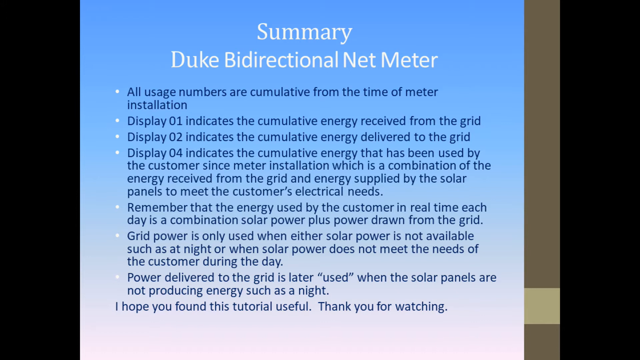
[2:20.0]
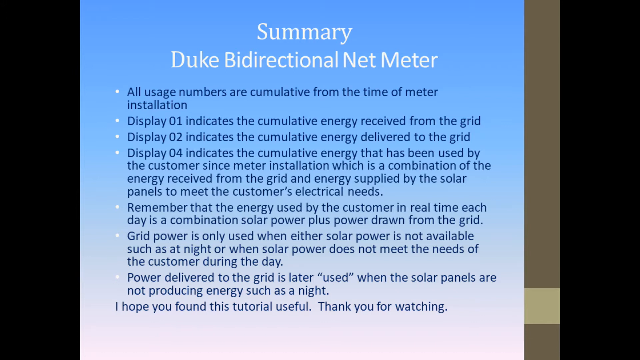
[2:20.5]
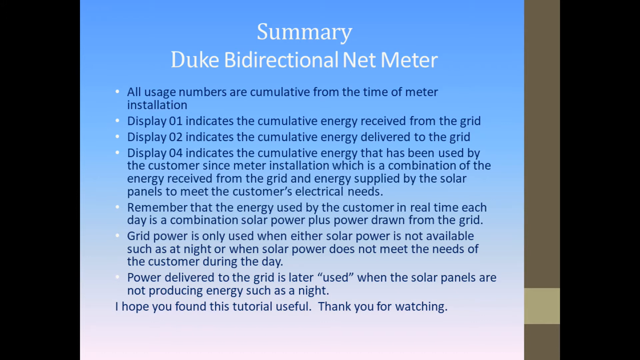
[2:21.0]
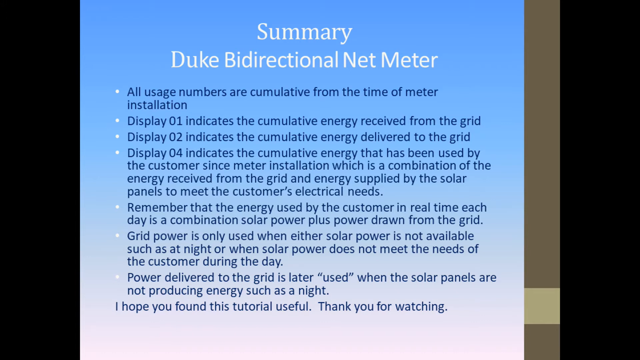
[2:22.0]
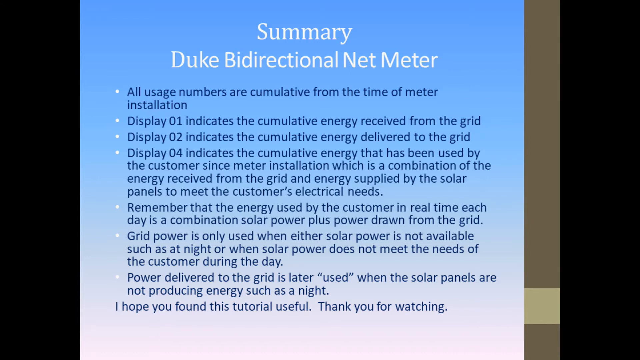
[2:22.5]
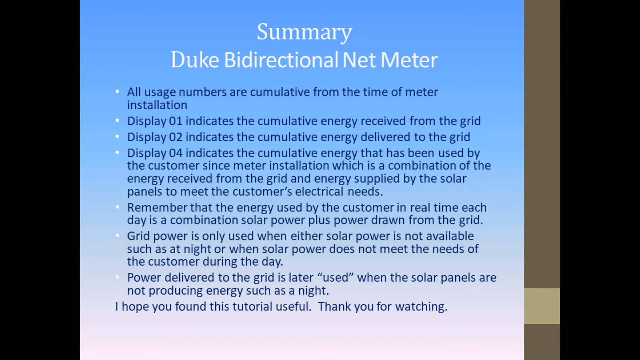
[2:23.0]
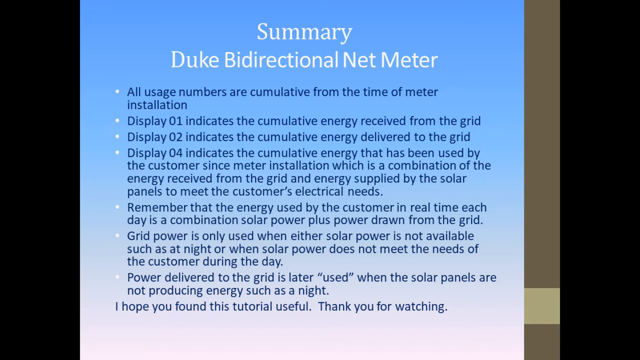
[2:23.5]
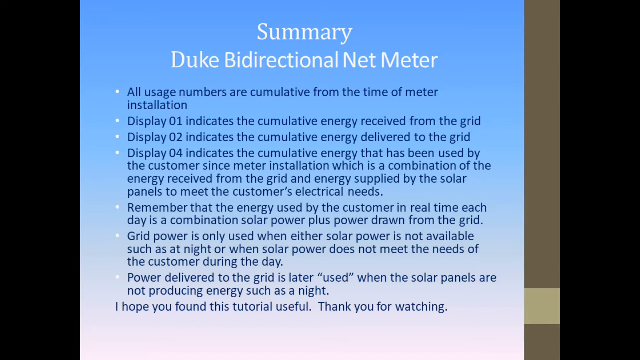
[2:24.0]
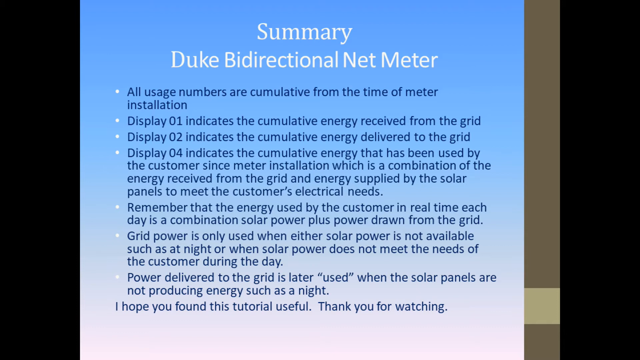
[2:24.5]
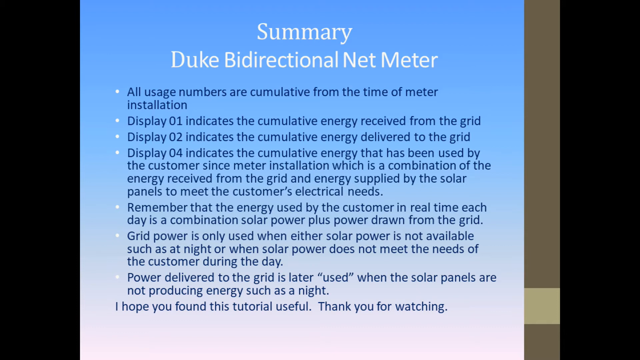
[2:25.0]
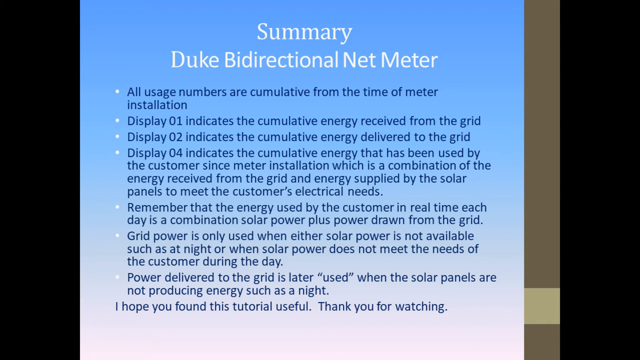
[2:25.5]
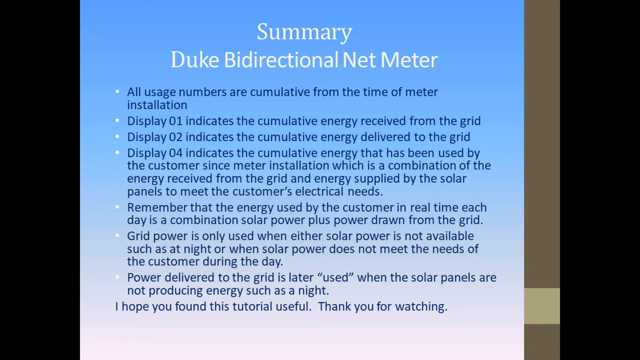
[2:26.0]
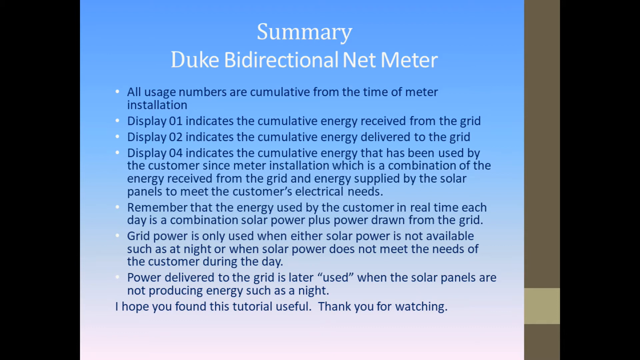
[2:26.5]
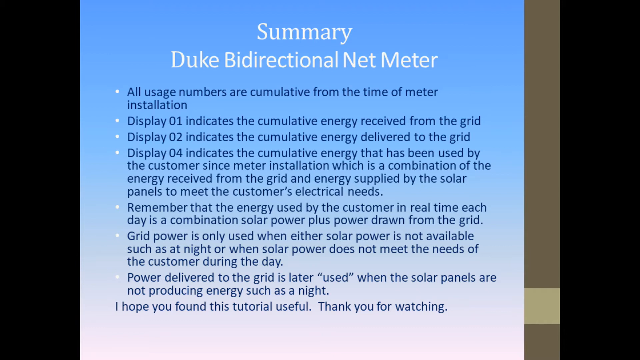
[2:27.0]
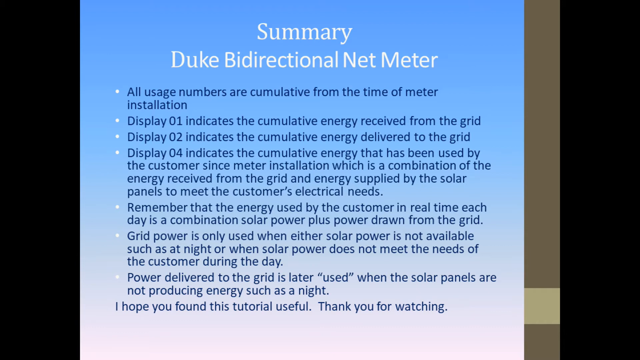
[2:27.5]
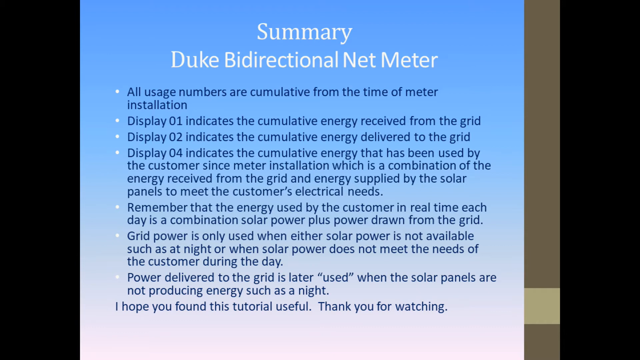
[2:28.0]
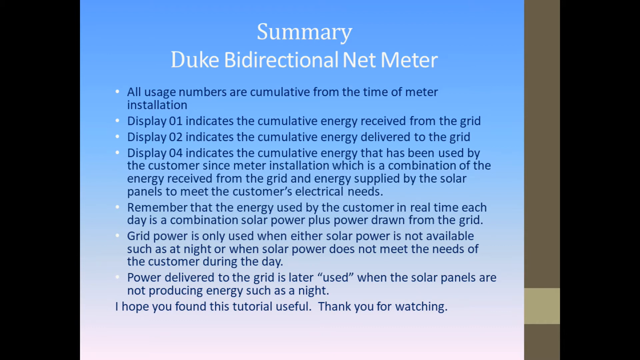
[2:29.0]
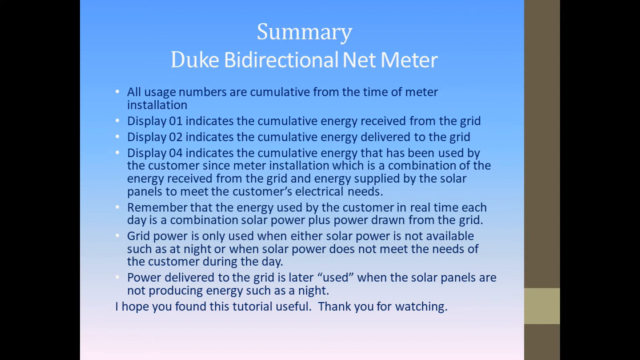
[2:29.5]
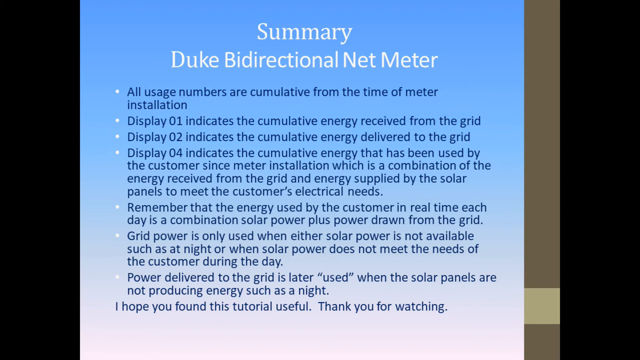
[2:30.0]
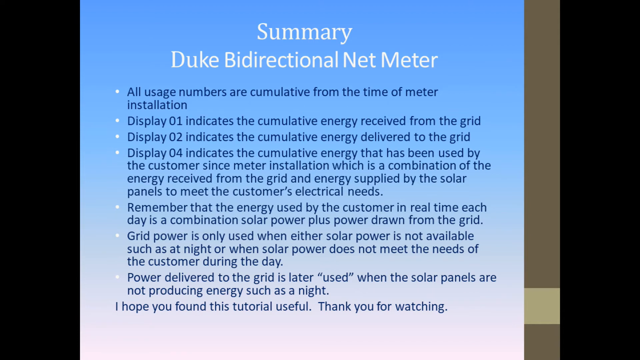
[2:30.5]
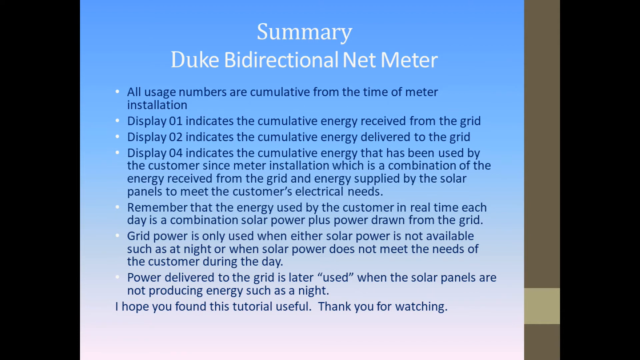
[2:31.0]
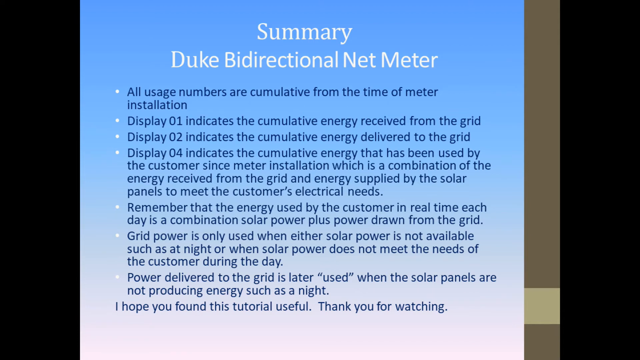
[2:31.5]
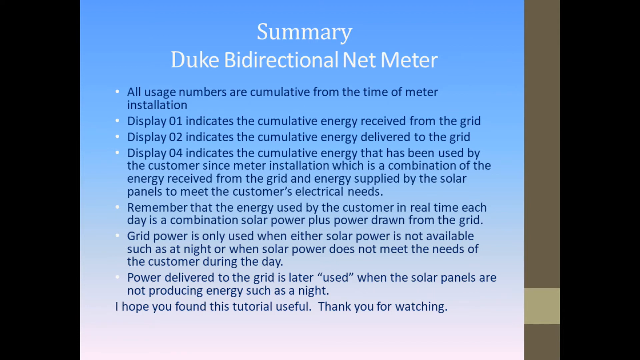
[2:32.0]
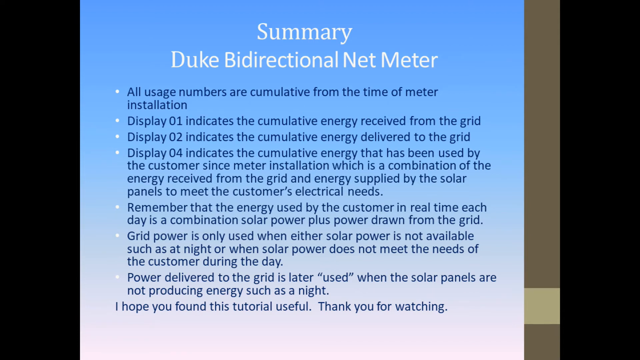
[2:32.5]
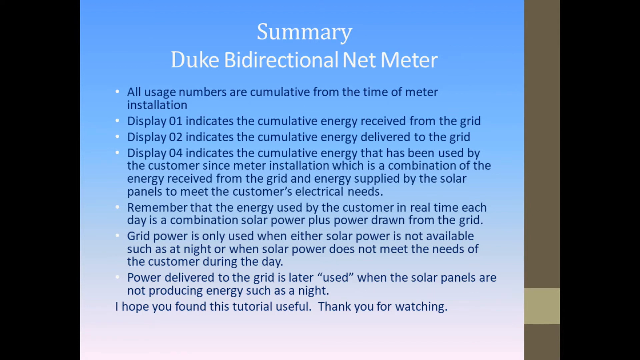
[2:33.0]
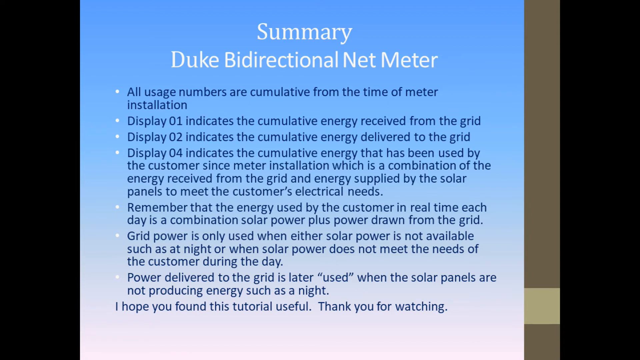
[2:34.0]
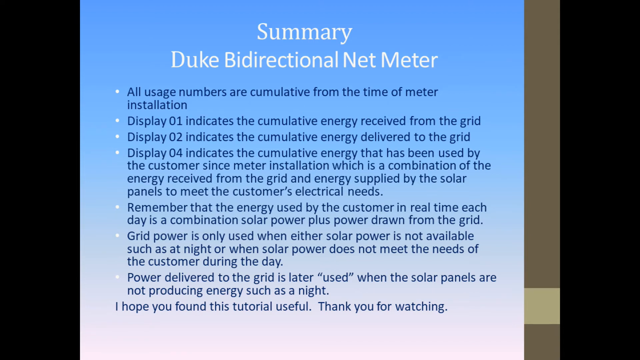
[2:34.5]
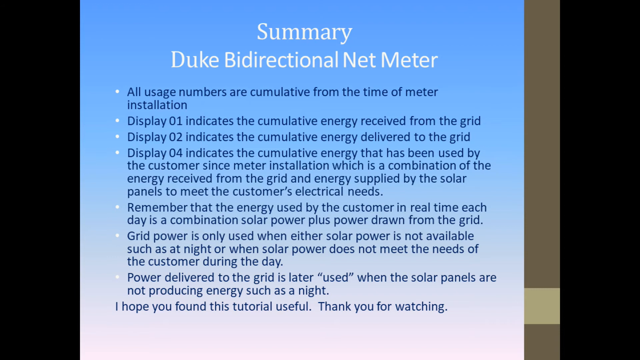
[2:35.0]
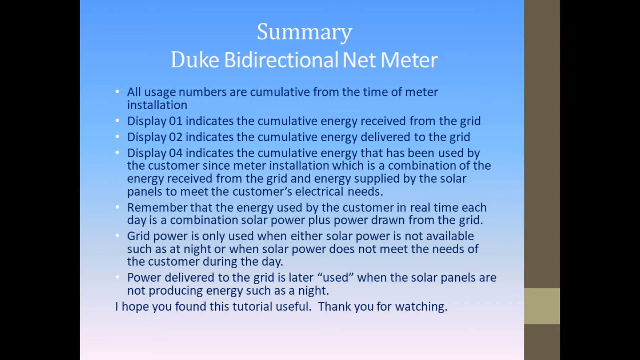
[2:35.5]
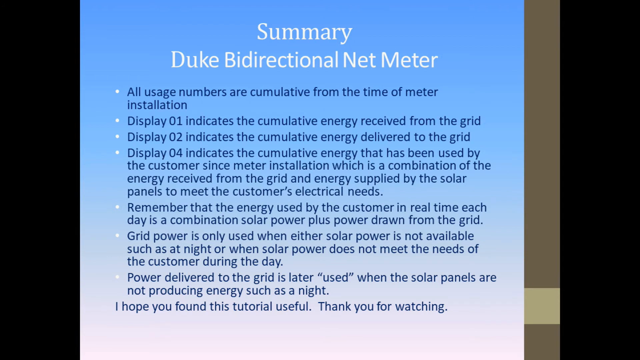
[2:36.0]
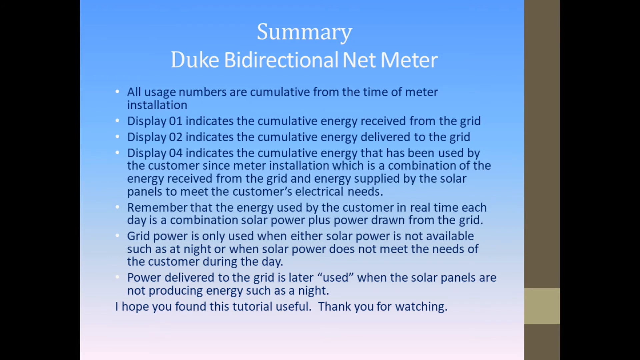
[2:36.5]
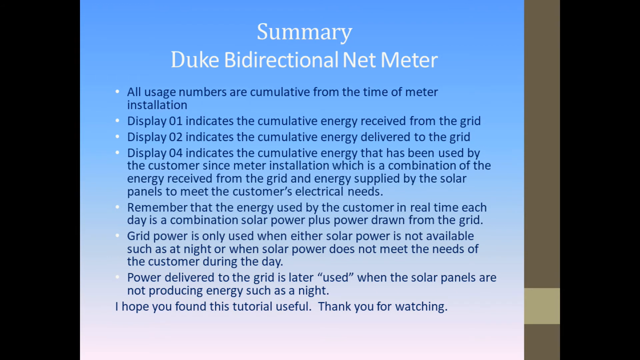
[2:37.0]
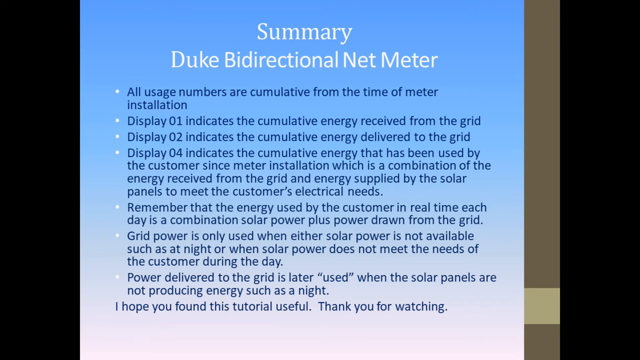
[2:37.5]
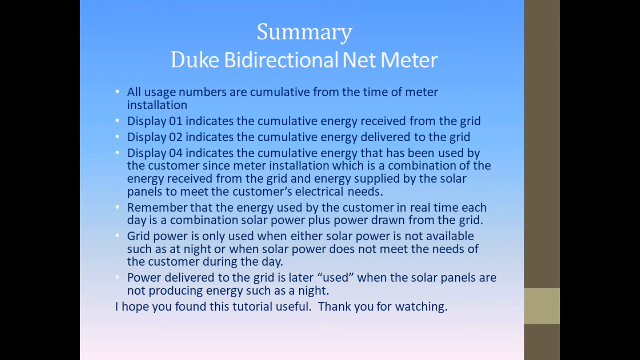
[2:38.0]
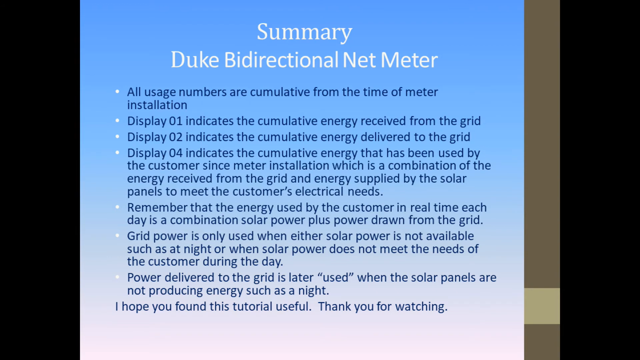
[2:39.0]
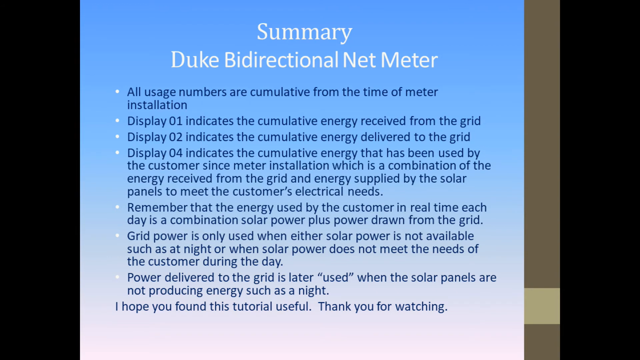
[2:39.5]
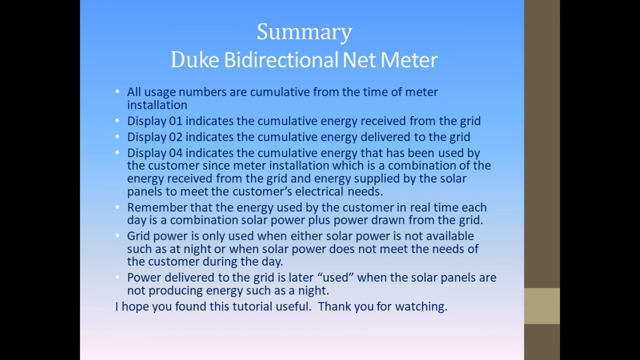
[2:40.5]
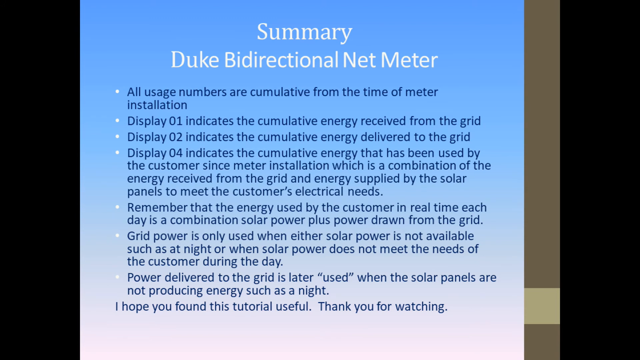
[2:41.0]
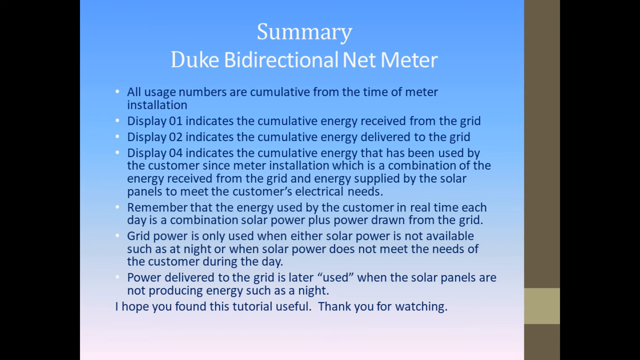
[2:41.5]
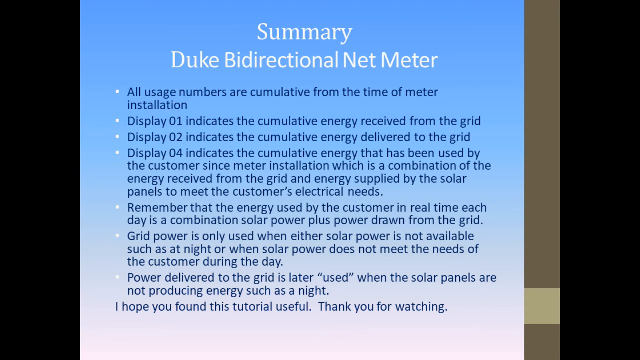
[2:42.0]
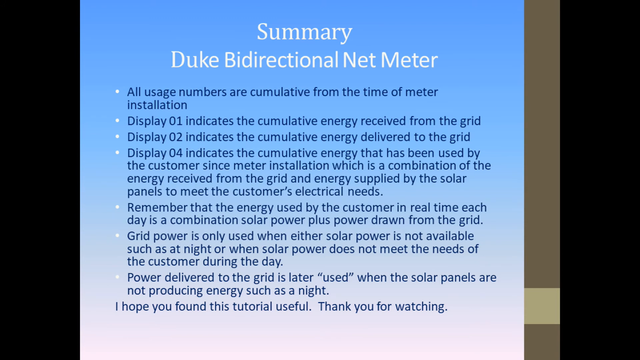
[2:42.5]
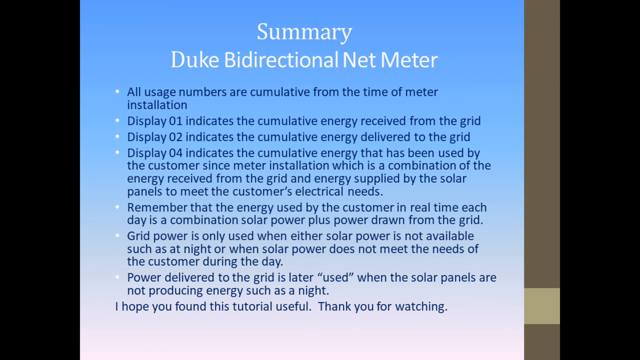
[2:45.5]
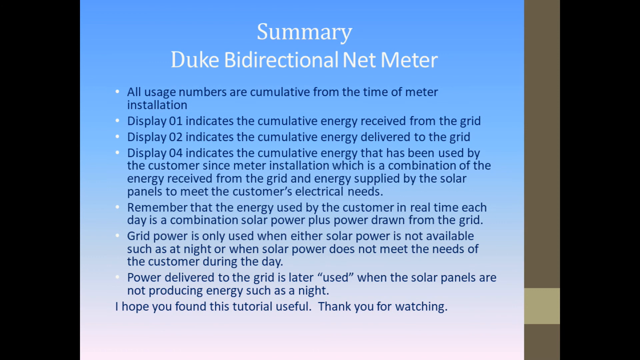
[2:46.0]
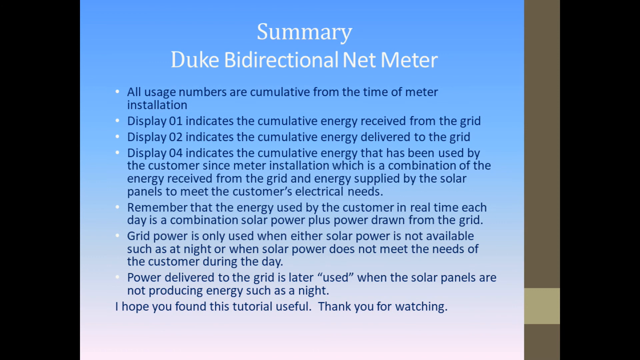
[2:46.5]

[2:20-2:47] The screen shows only the summary. At the top, "Summary" appears in white block letters, not huge, and beneath it "Duke Bi Directional Net Meter" in white block letters. After a space come bullet points marked with white dots, with all text in dark blue: "All usage numbers are cumulative from the time of meter installation"; "Display 01 indicates the cumulative energy received from the grid"; "Display 02 indicates the cumulative energy delivered to the grid"; "Display 04 indicates the cumulative energy that has been used by the customer since meter installation, which is a combination of the energy received from the grid and energy supplied by the solar panels to meet the customer's electrical needs"; "Remember that the energy used by the customer in real time each day is a combination solar power plus power drawn from the grid"; "Grid power is only used when either solar power is not available, such as at night, or when solar power does not meet the needs of the customer during the day"; and the final bullet, "Power delivered by the grid is later 'used' when the solar panels are not producing energy, such as at night", with "used" in quotation marks. Underneath it says "I hope you found this tutorial useful. Thank you for watching."